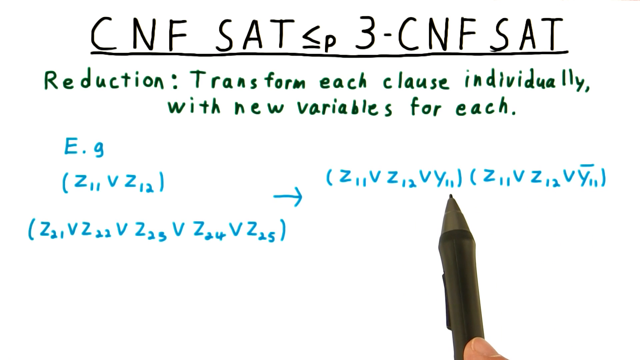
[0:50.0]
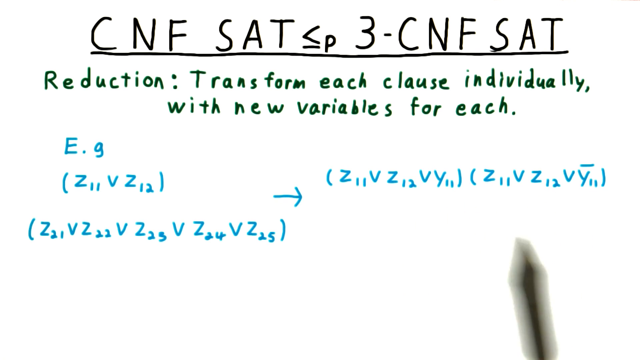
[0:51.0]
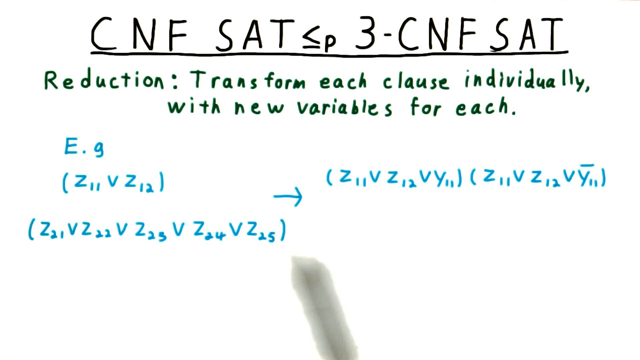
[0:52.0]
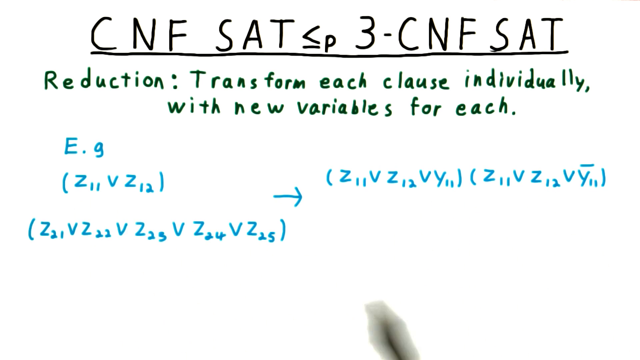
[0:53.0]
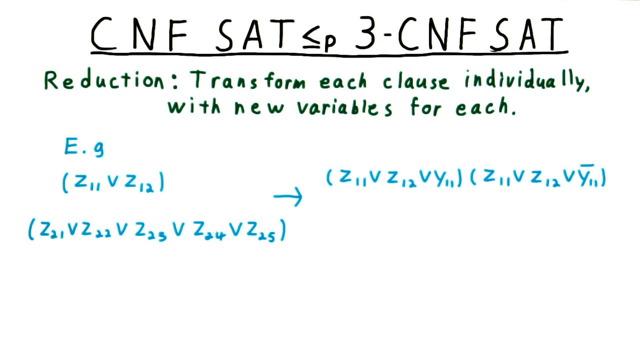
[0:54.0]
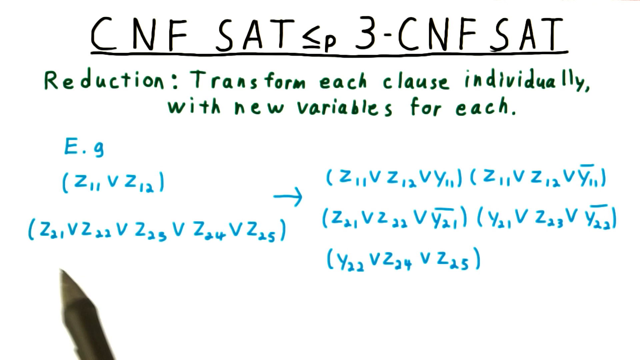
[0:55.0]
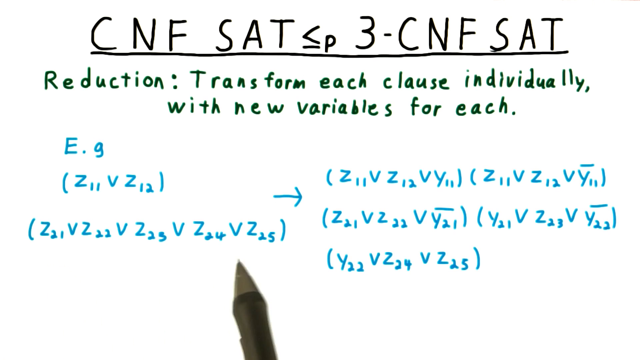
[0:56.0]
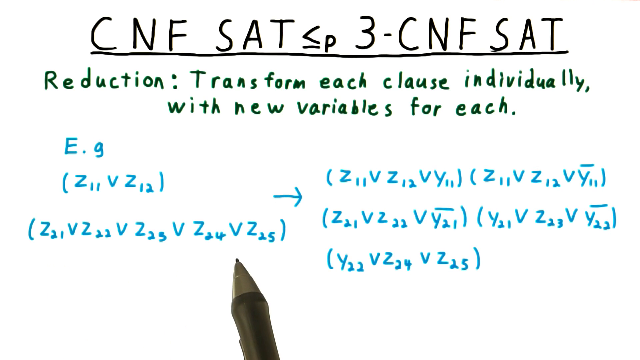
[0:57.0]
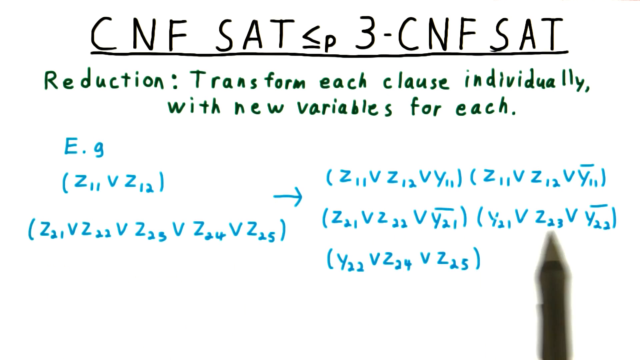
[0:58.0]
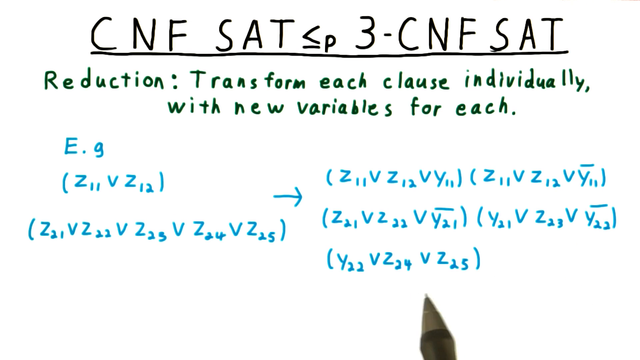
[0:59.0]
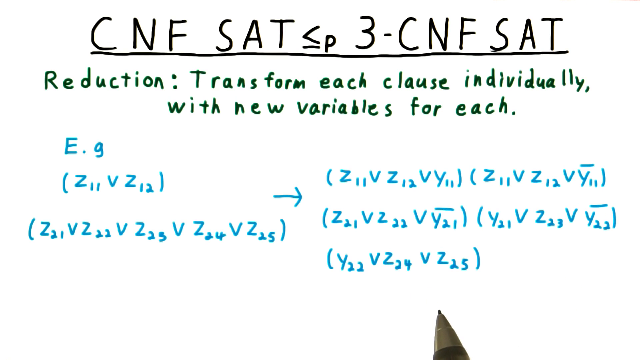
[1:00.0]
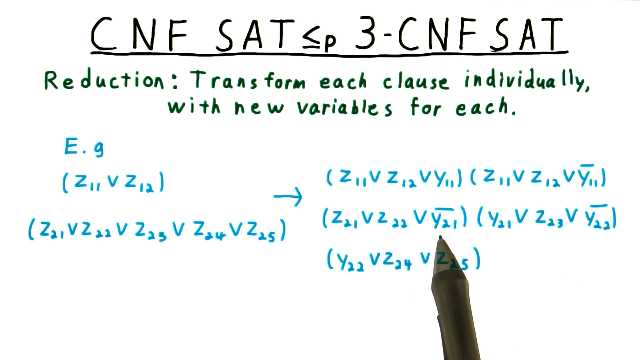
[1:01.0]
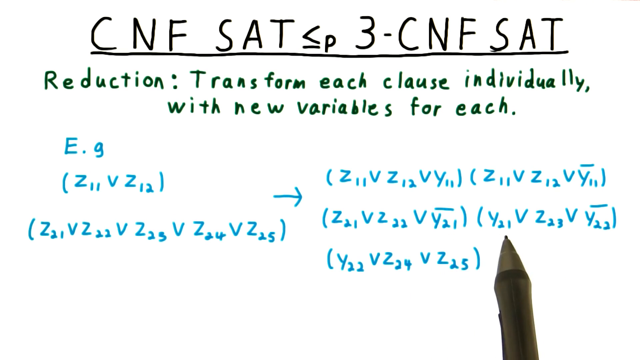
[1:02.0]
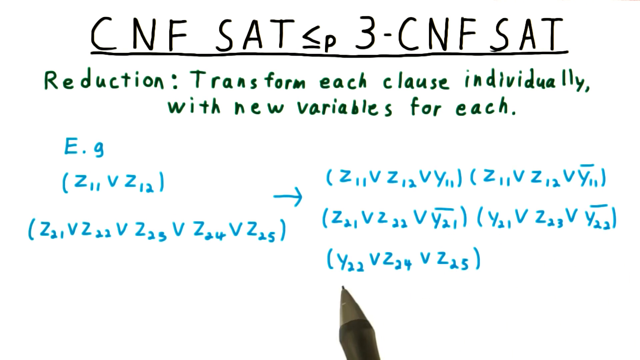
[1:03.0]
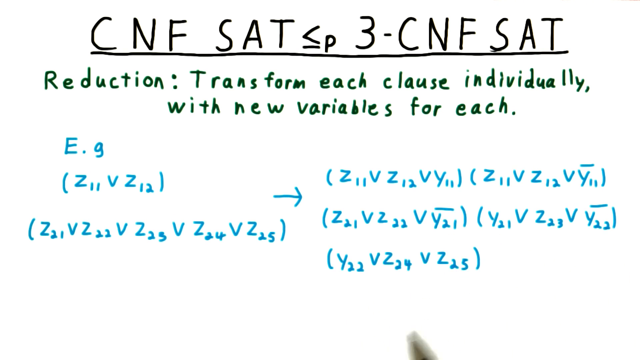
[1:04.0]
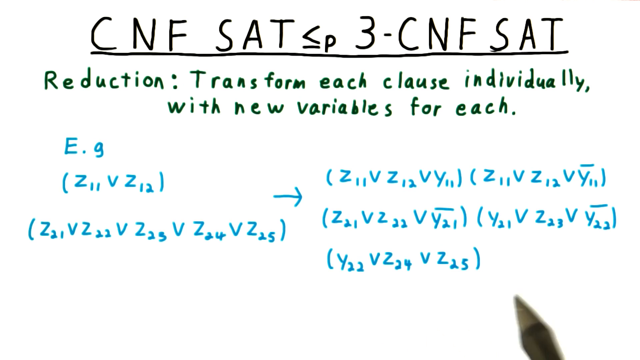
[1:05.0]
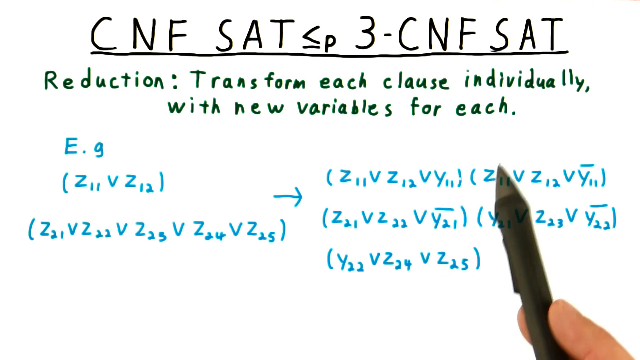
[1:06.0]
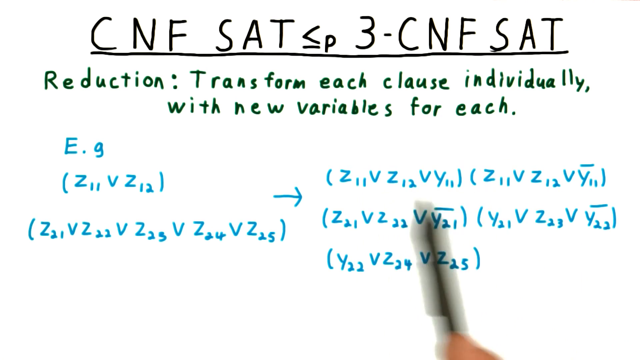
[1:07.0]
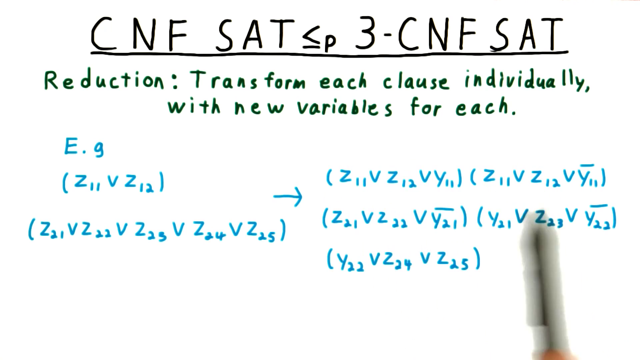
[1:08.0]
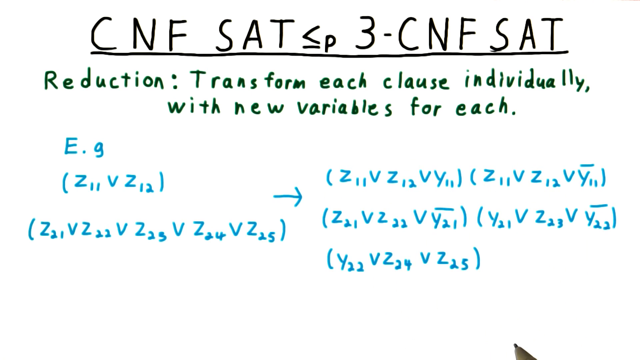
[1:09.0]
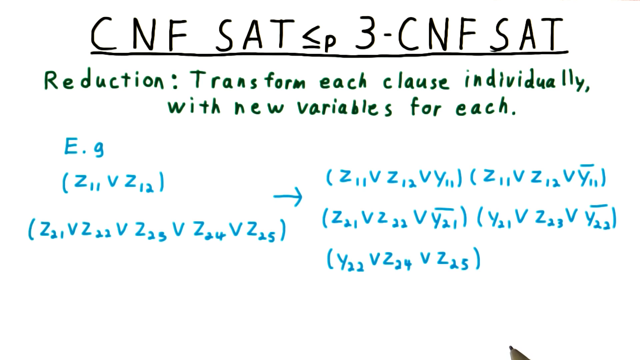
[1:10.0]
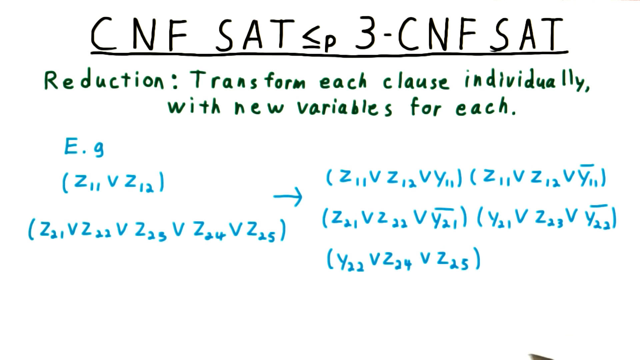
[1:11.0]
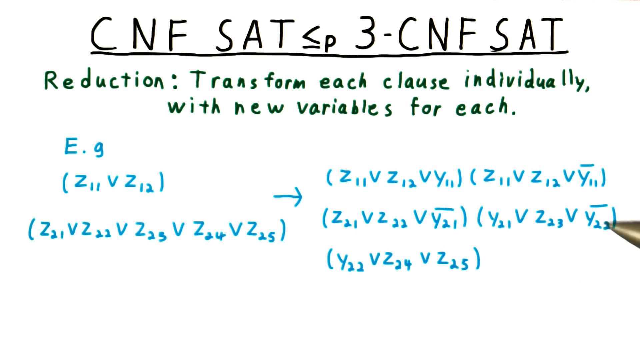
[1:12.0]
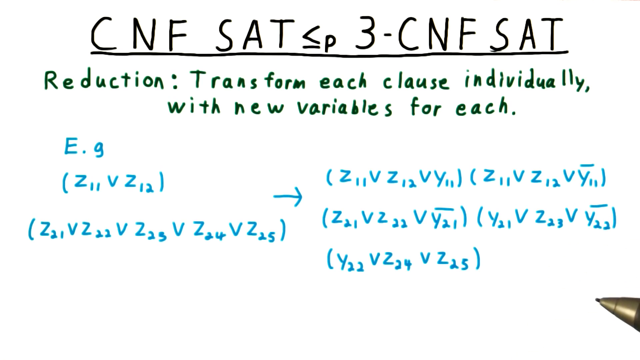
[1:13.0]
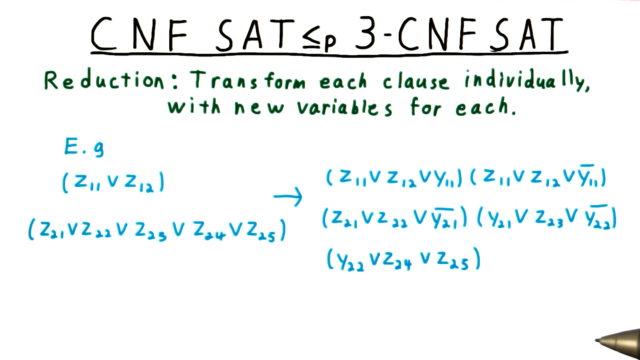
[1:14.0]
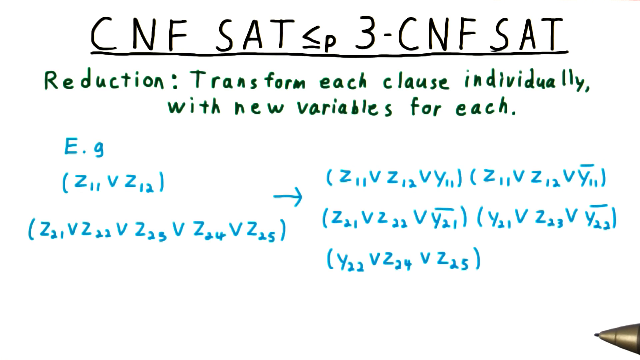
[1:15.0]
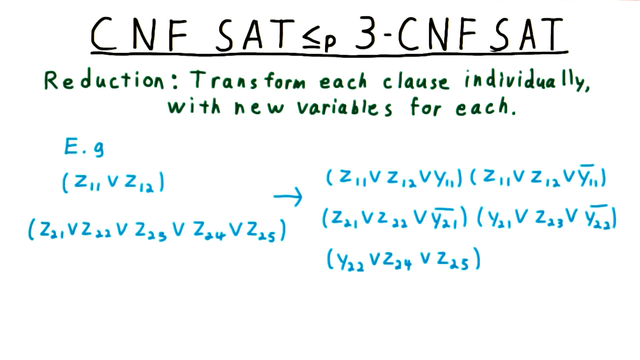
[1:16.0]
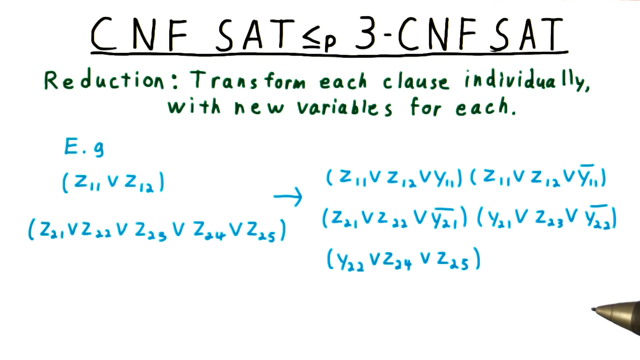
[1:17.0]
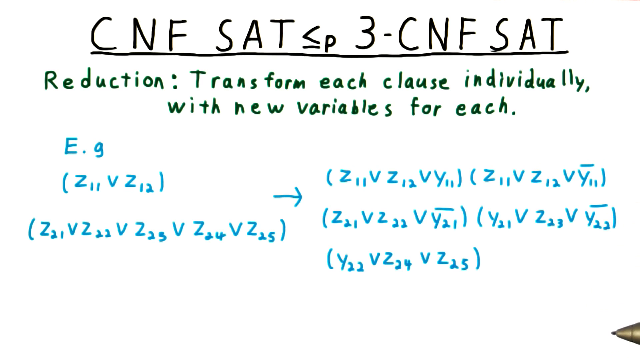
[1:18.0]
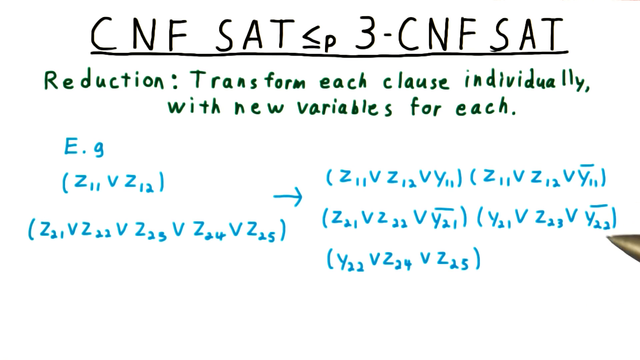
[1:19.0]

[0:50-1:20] The person continuously moves the pen around, shaking it slightly. At first it points at the blue text that just appeared on the right side, moving back and forth along it, then moves left to some of the variables for a split second. It moves back quickly to the right side as three more sets of variables and brackets appear below the existing ones, all in the same blue marker. It moves quickly back to the left, then around the center, before returning to the three new sets. The mechanical pencil then moves up and down and shakes a little at the bottom of the new text. The pen disappears off the bottom of the screen and reappears on the left side by the new sets. The mechanical pencil is only slightly on screen, moving up and down, and finally moves from the right to the left.